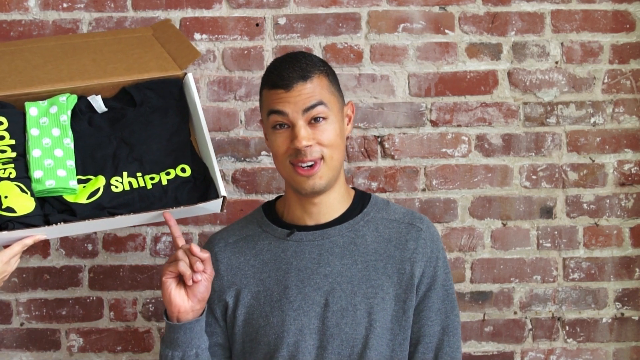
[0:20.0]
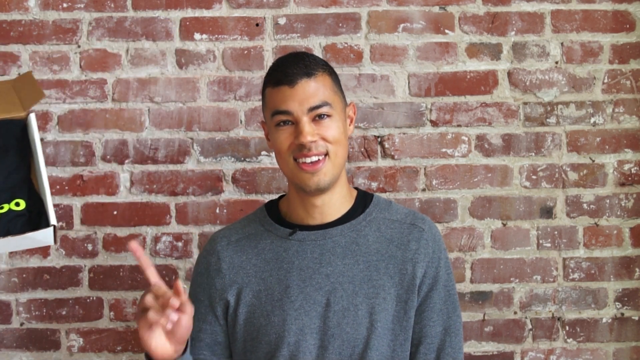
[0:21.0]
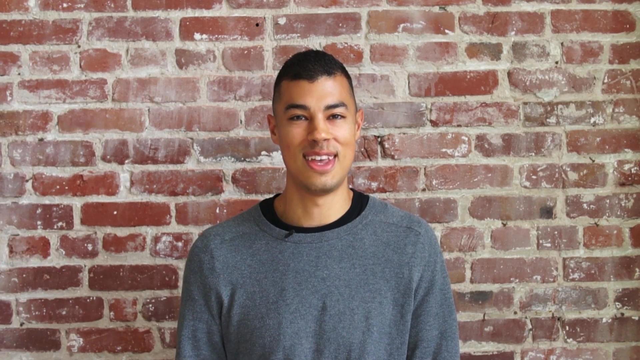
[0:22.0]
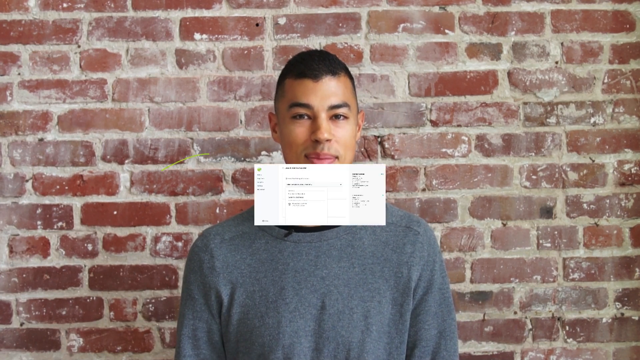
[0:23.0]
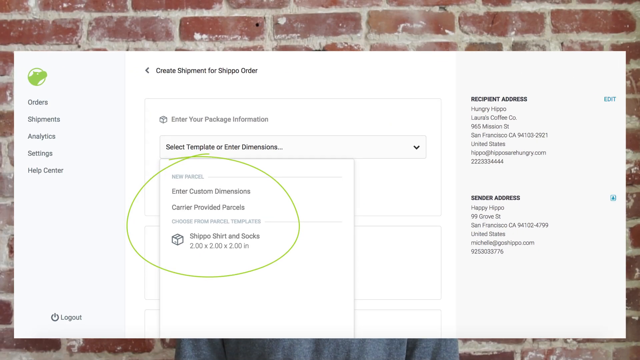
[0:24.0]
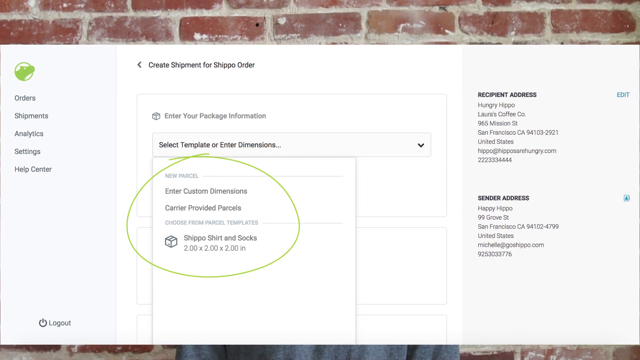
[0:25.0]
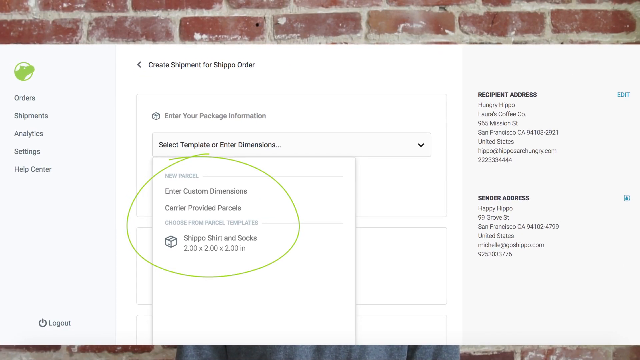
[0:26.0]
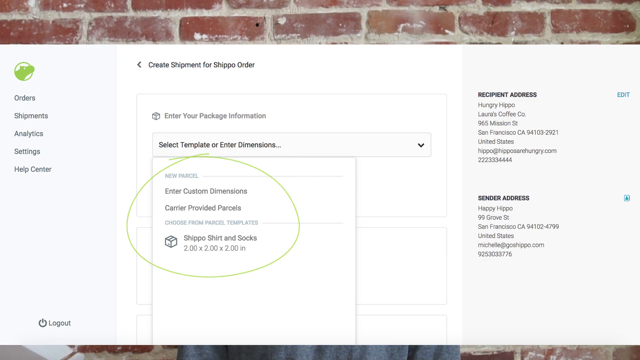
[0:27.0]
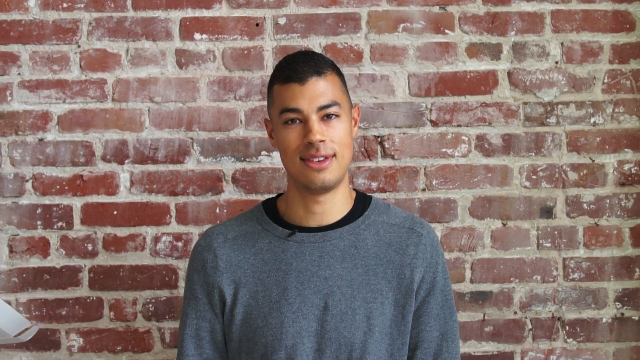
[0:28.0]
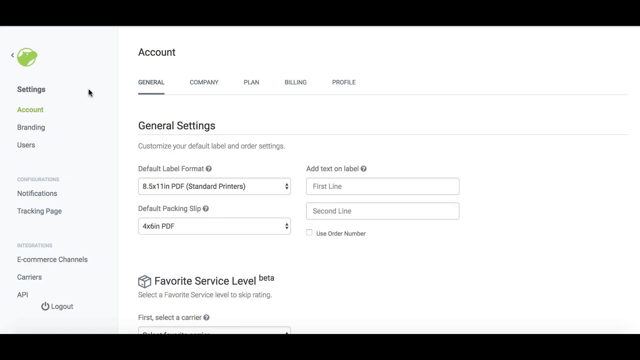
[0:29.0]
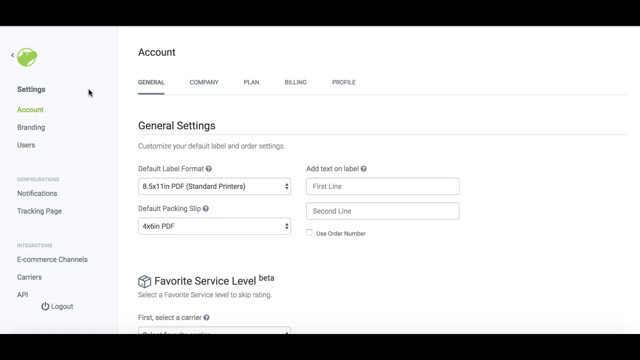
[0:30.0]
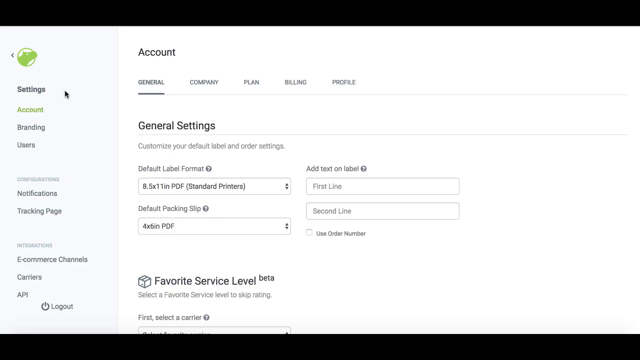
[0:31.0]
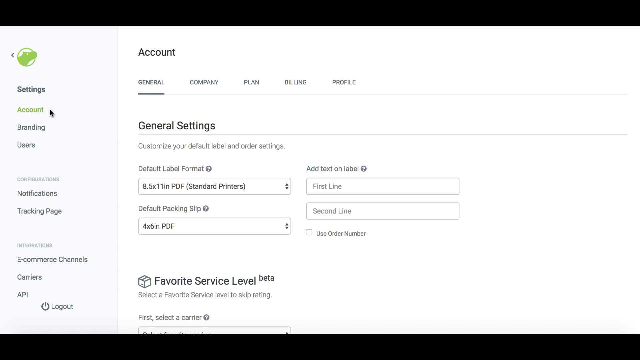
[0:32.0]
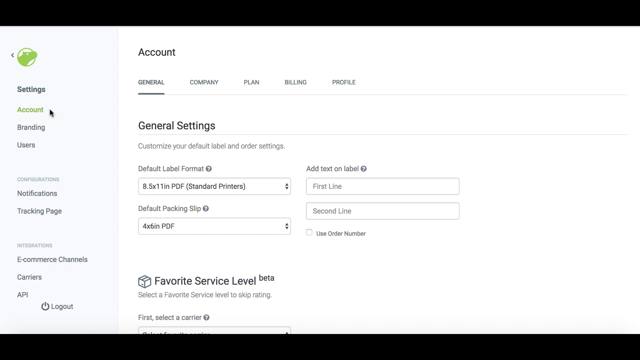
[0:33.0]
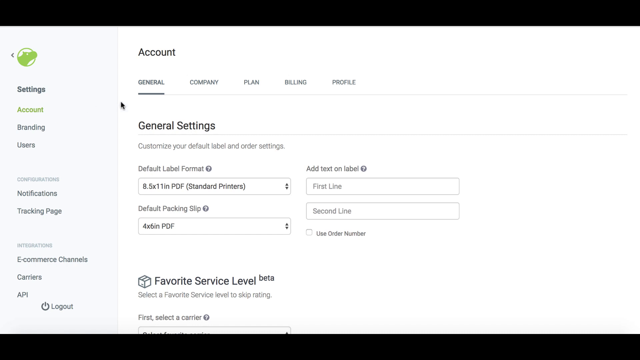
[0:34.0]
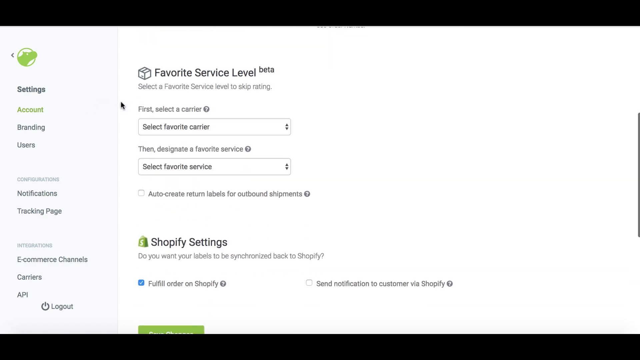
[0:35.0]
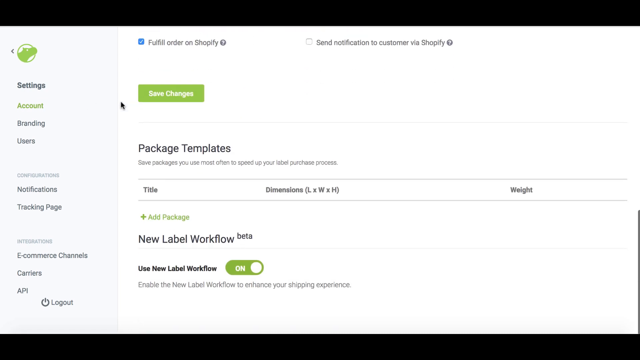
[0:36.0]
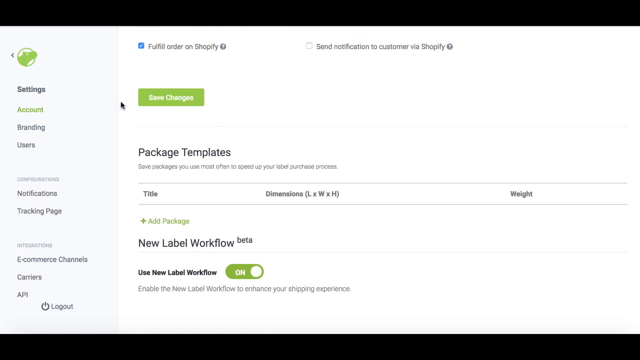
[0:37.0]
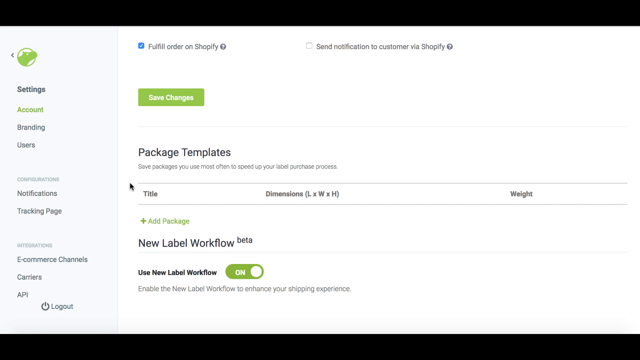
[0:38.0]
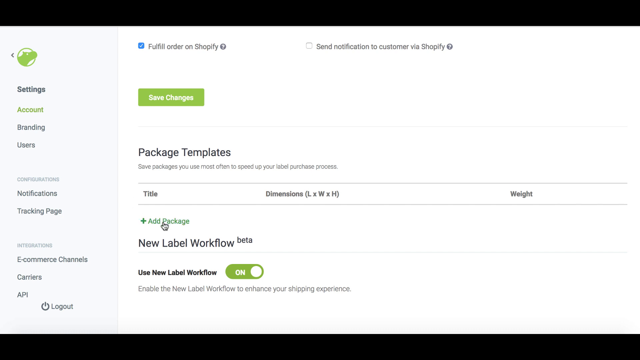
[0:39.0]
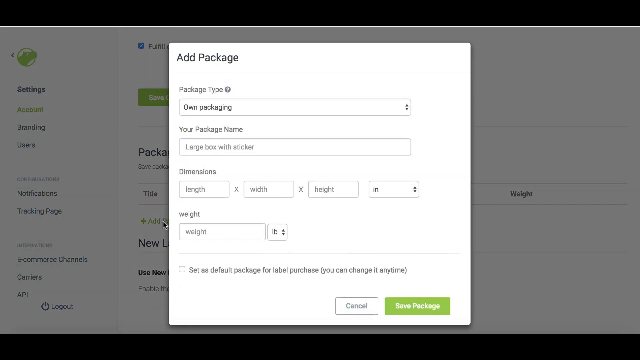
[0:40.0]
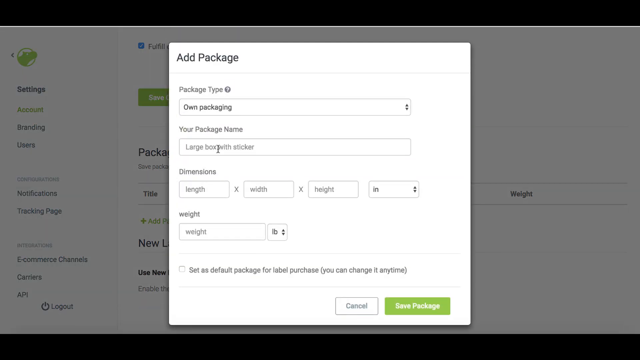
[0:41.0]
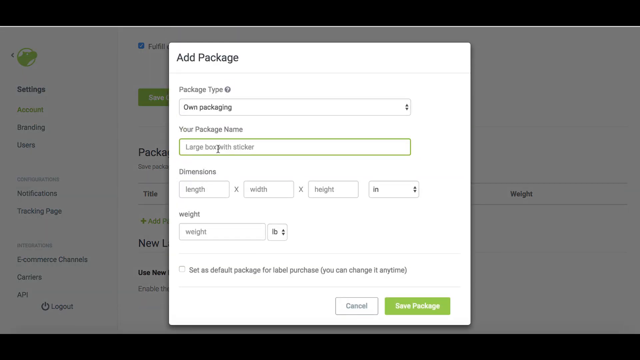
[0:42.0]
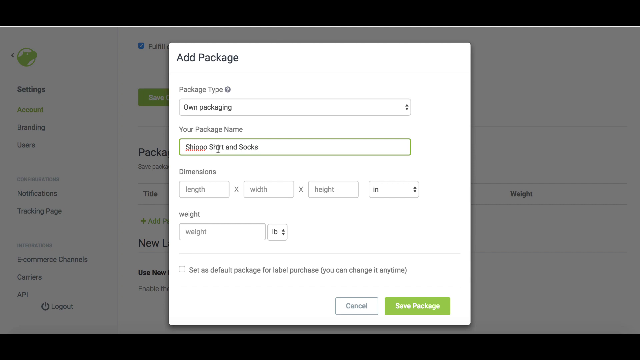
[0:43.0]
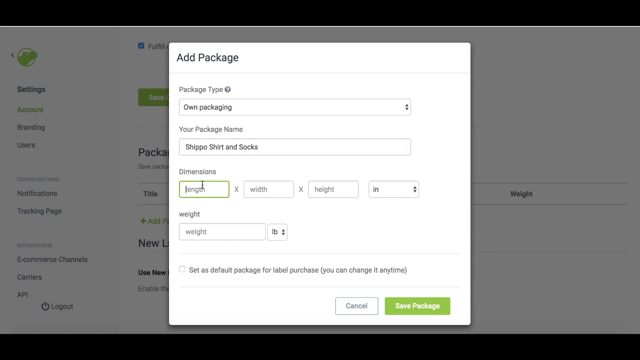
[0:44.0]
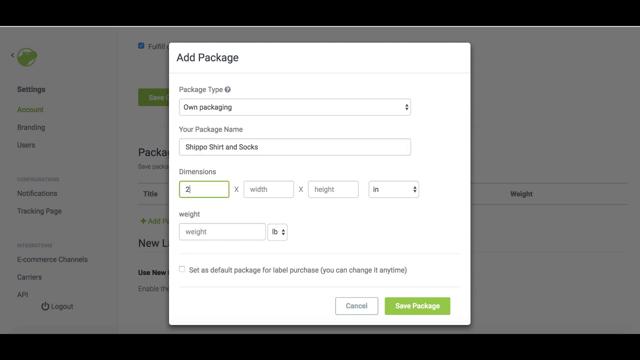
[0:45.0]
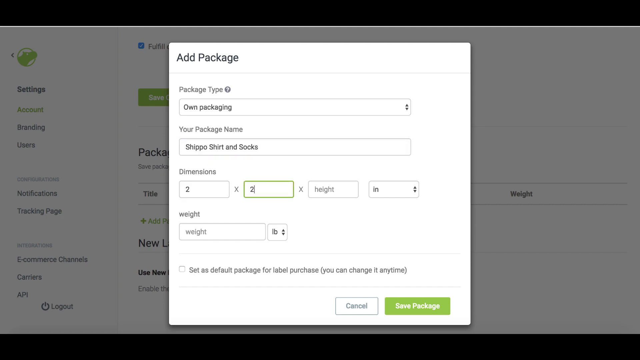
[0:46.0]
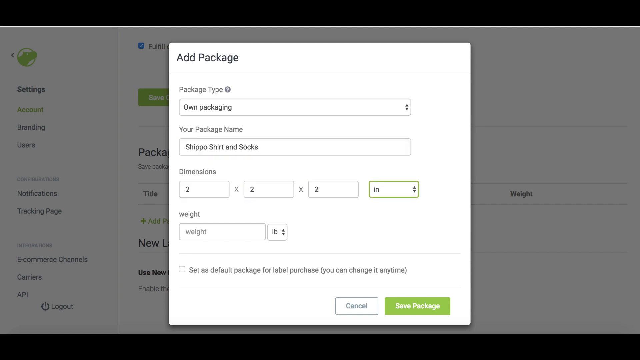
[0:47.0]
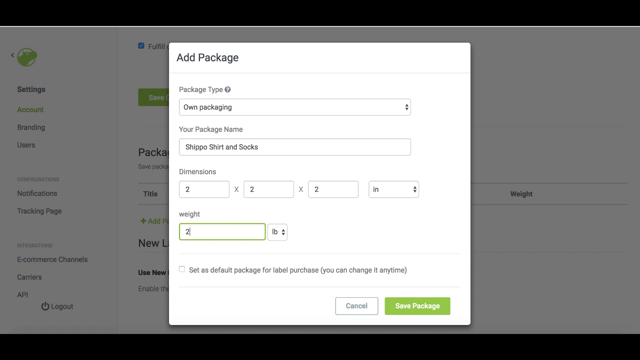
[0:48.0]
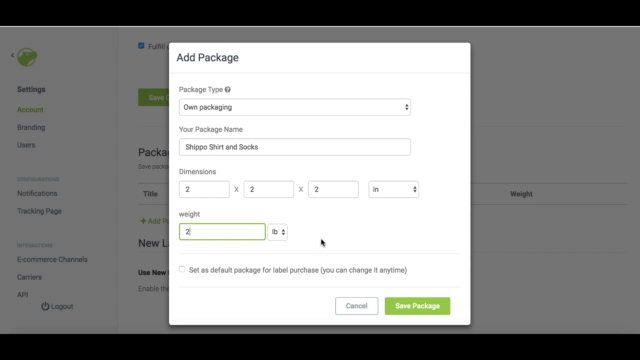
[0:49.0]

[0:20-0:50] The man in a grey sweatshirt with a black undertop stands in front of the brick backdrop as the Shippo merch box is shown; he is kind of smiling, with a lighthearted expression, before the box slides out of frame. The video then skips to what looks like an account page on the Shippo website, apparently as a tutorial. The first page shown is about creating a shipment for a Shippo order. Then account information is shown, and it goes down to adding a package, showing how to add the sizing and weight of what is in the box.